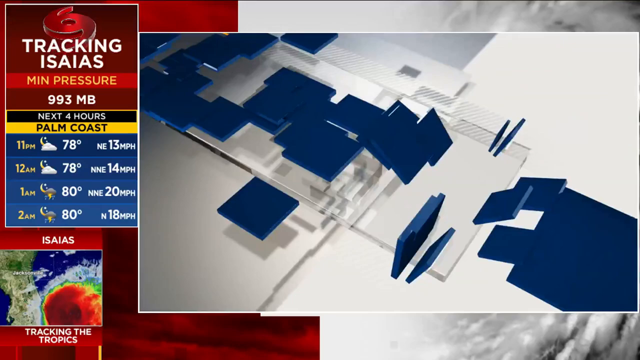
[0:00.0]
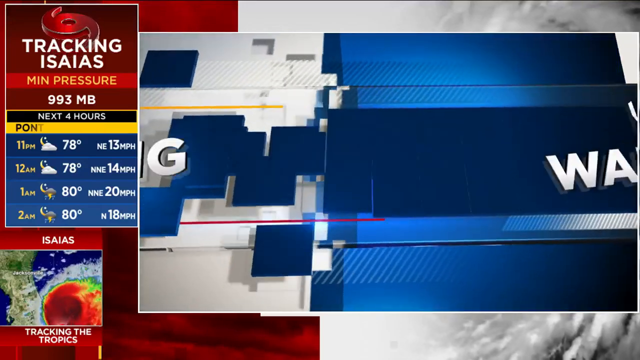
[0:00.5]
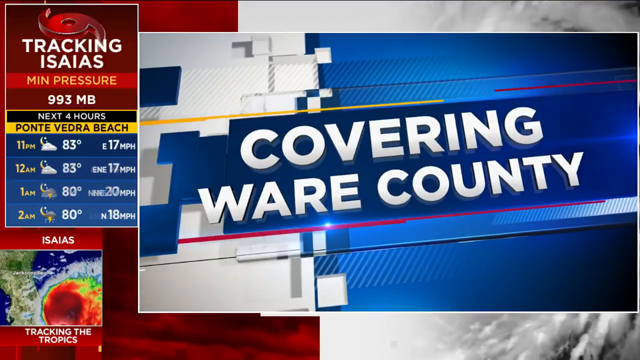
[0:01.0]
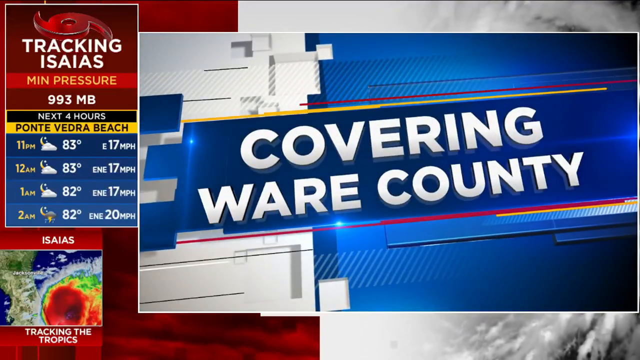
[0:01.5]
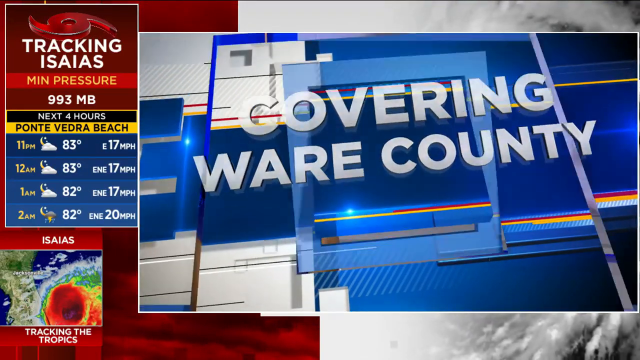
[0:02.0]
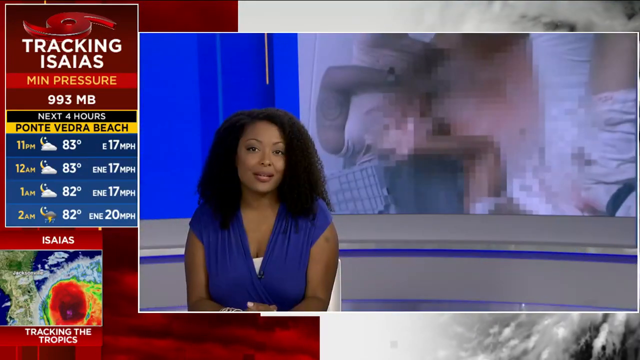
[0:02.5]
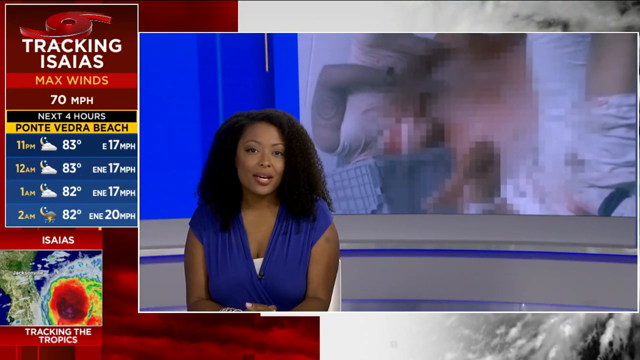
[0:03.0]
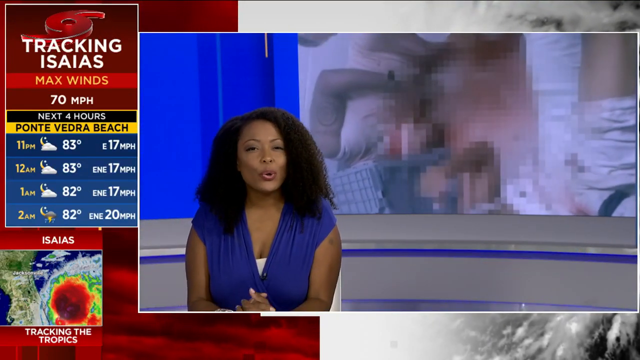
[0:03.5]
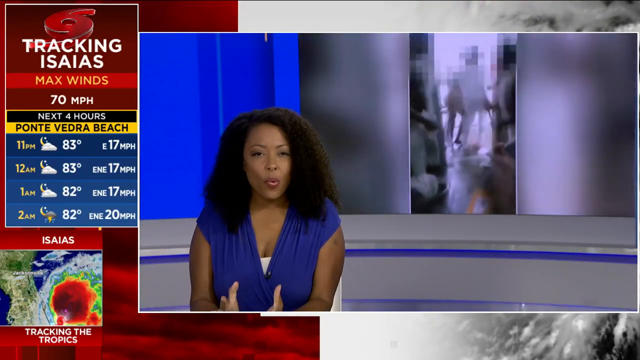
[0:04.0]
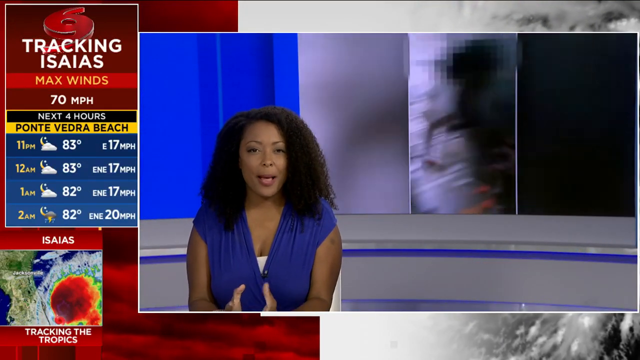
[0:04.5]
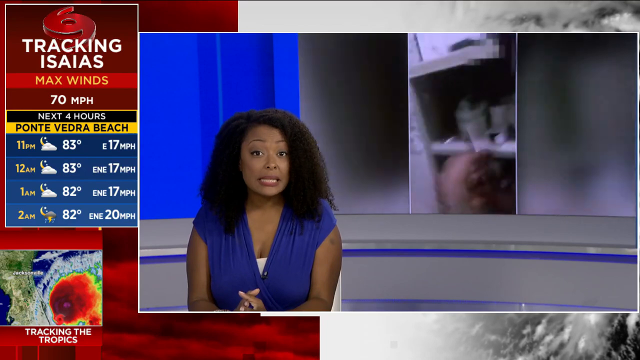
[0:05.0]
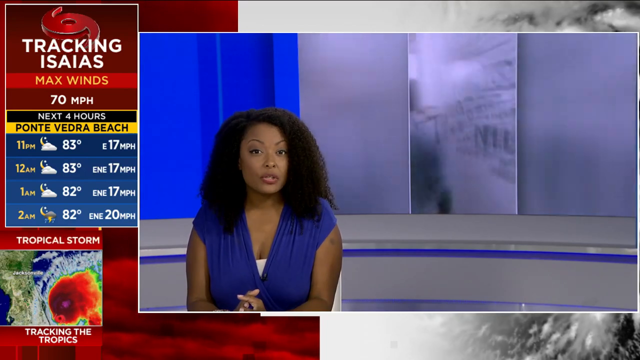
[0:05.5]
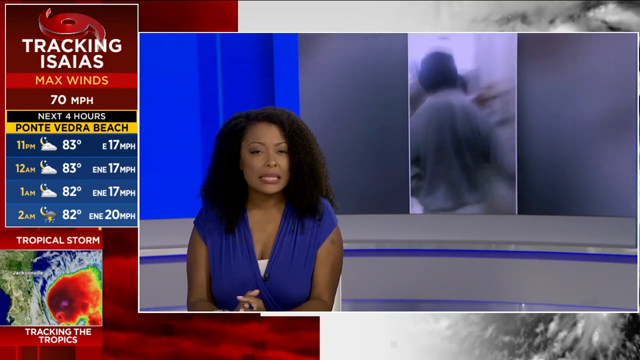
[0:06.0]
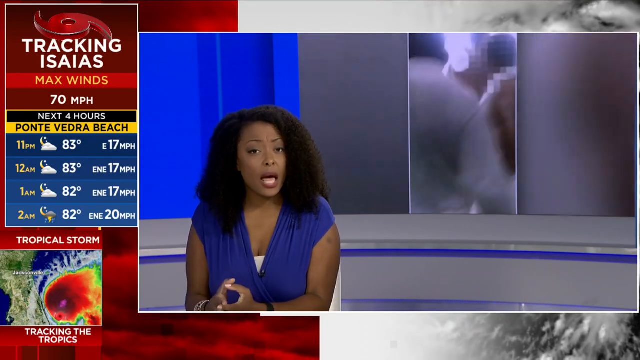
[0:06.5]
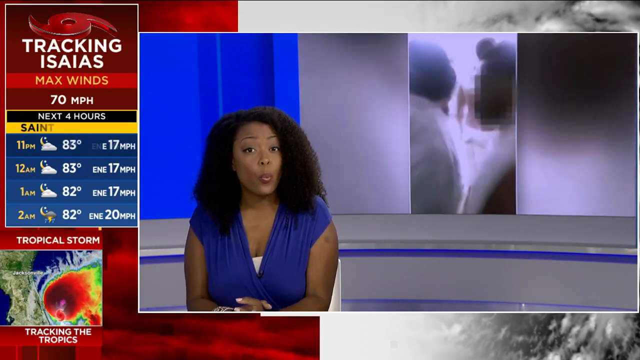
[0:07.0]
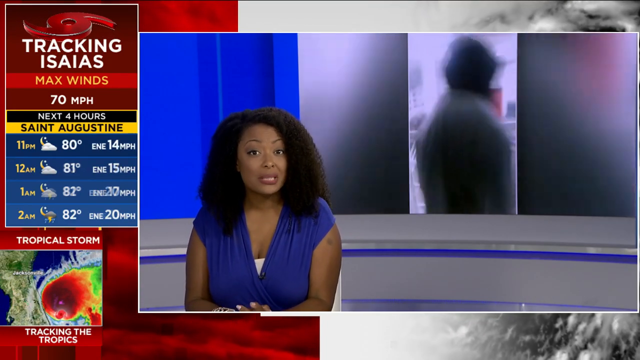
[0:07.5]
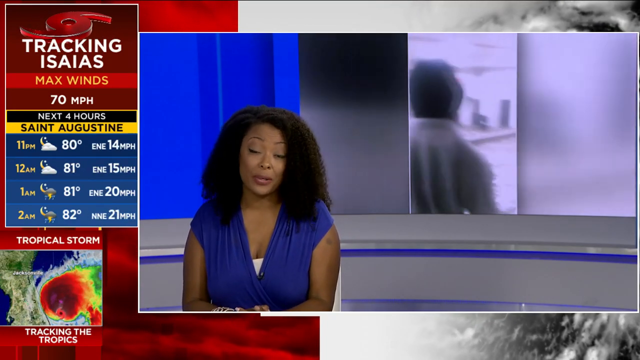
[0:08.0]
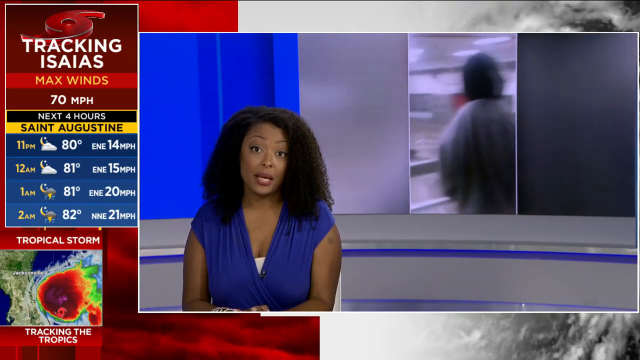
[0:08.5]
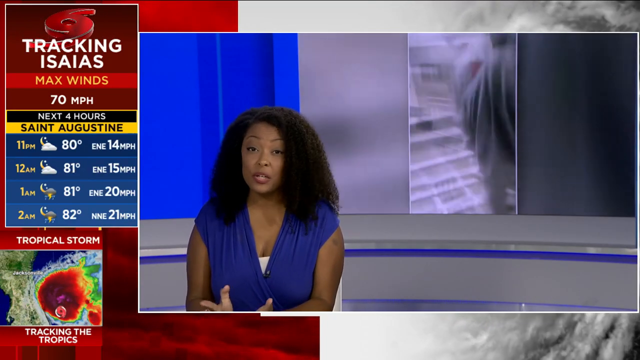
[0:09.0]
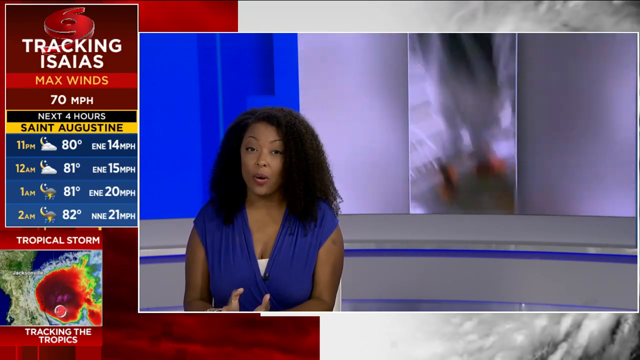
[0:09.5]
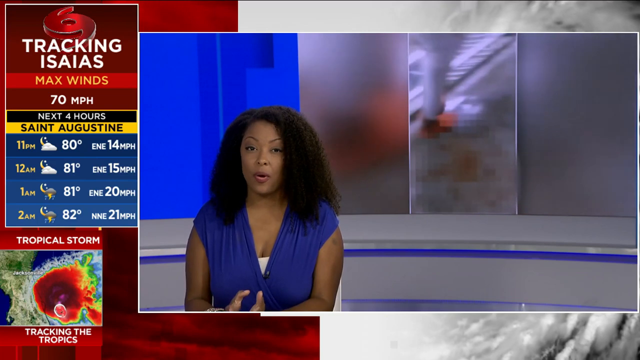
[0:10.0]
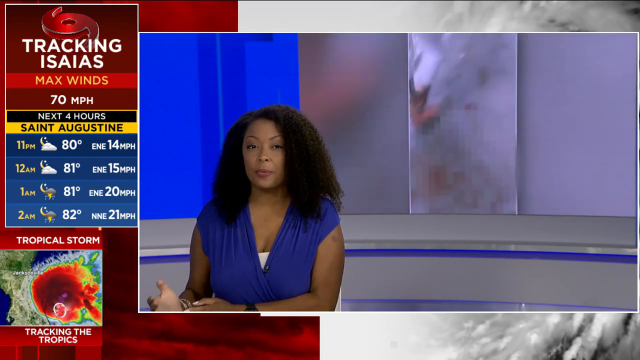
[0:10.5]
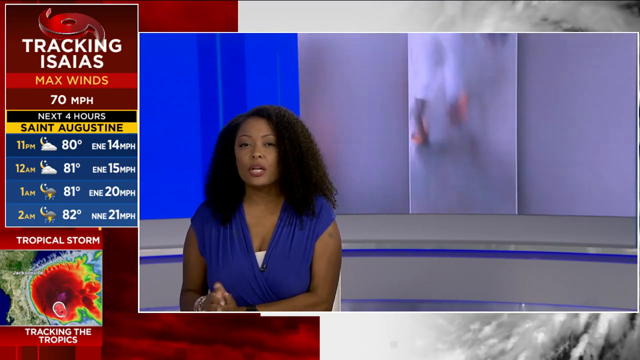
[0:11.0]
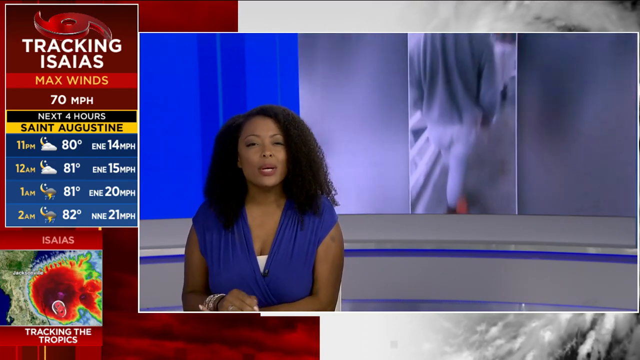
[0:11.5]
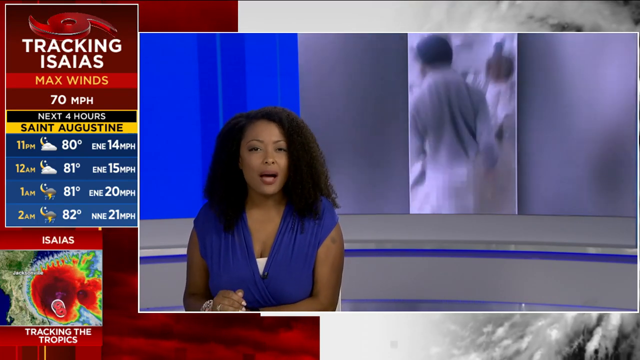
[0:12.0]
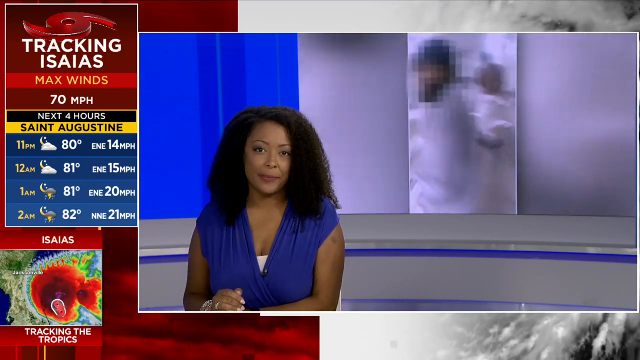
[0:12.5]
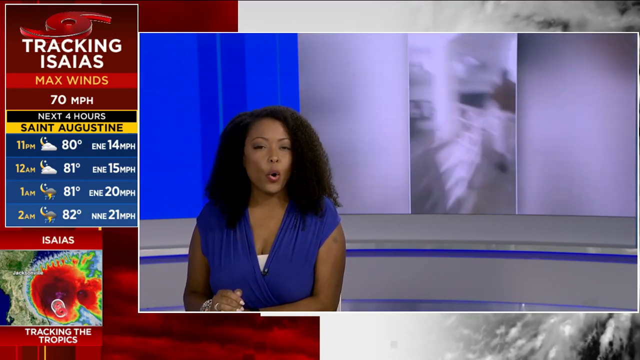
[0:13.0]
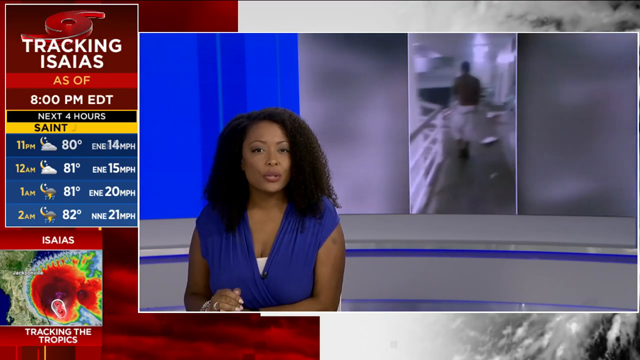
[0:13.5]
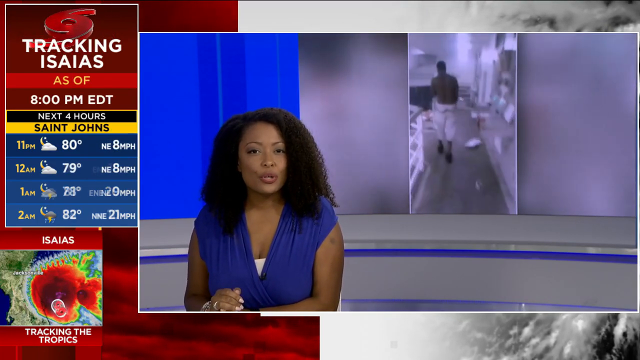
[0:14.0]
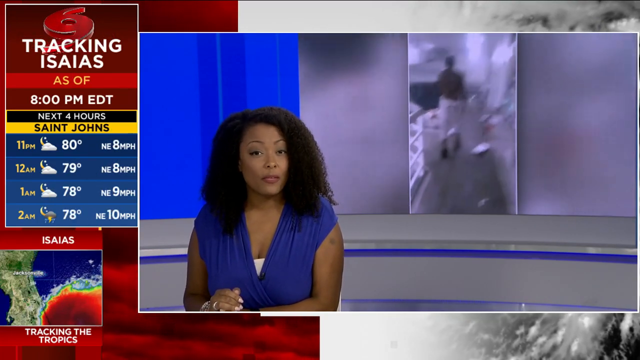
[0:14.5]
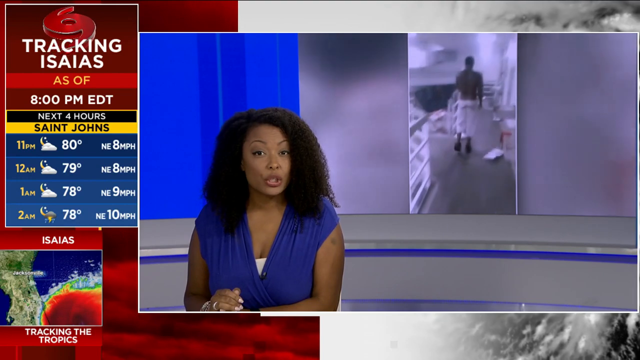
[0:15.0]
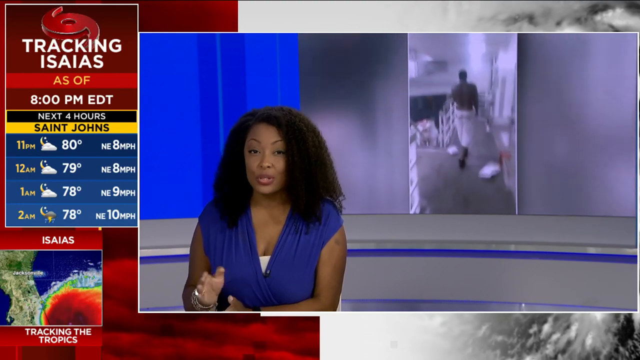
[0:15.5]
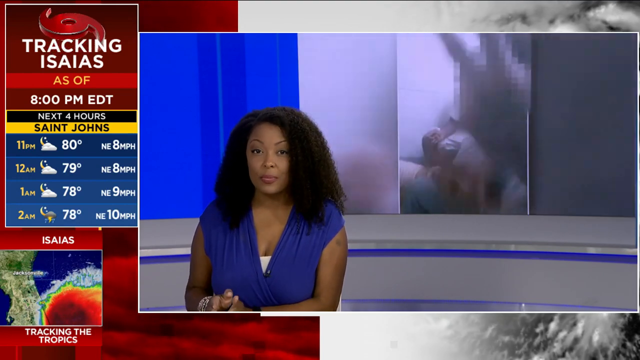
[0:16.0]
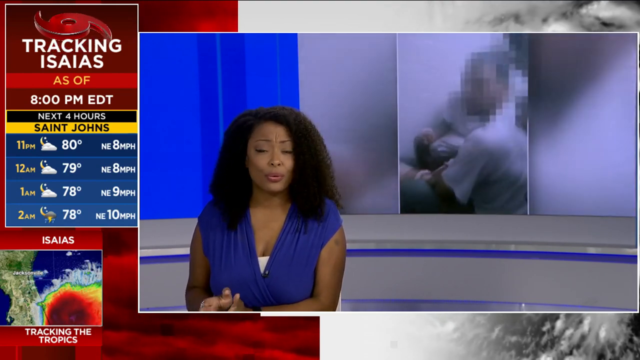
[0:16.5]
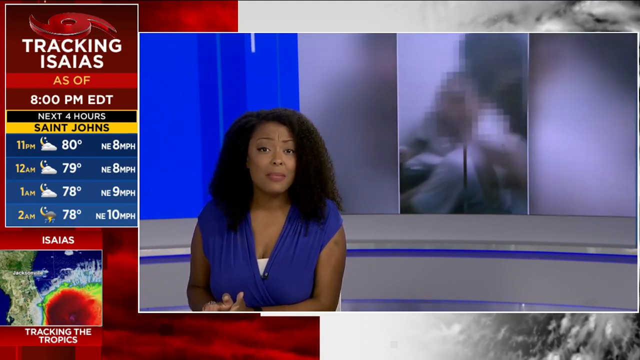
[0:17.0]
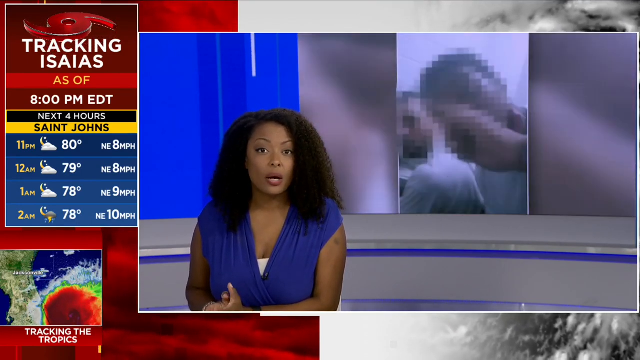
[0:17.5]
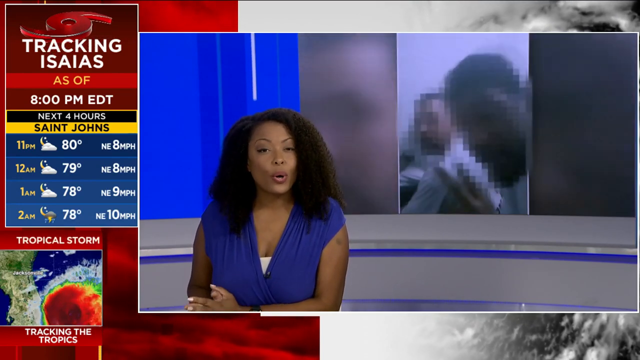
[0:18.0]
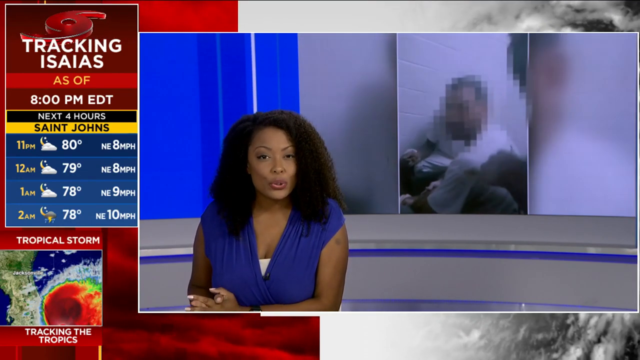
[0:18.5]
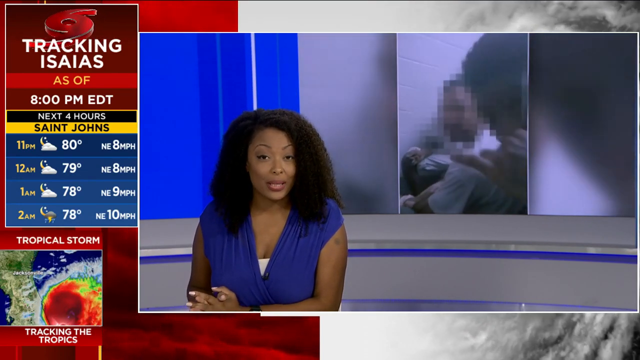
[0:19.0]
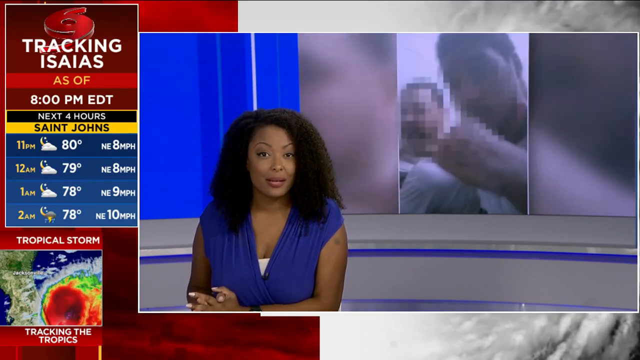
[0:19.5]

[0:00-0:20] The video first shows a pressure-tracking graphic in red, a dark red with a light red line, and white lettering reading what is apparently "993" MB. "Next four hours" is written in white on a black line, and "Palm Coast" is written in black on a yellow line. Underneath is the weather, with all the writing in white, and below that is what looks like a weather forecast showing a storm. A woman, probably about 40, with very puffy, curly hair, wears a blue blouse with a white shirt underneath. Her hands move as she talks, and she cups them together. Behind her, a video plays of what looks like people in a building with white rails; two or three men walk, and one of them is crouching.